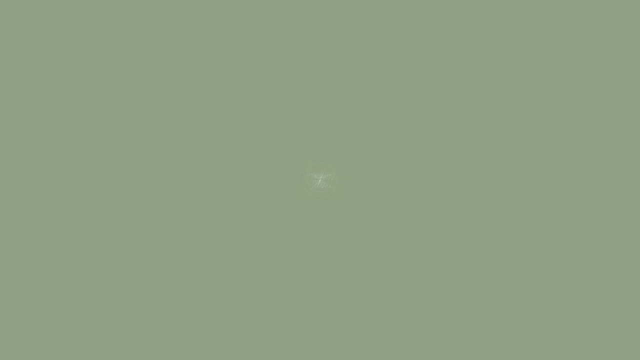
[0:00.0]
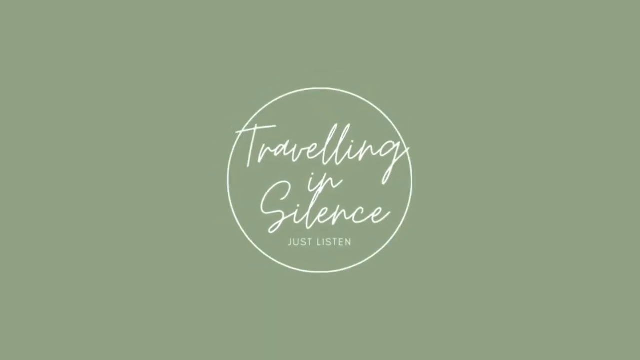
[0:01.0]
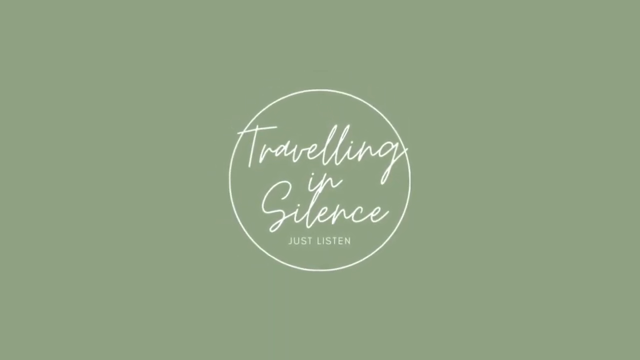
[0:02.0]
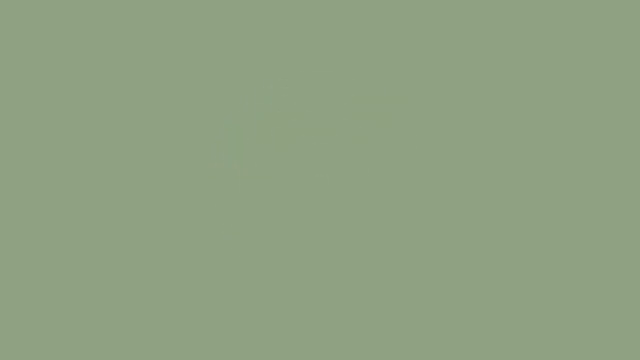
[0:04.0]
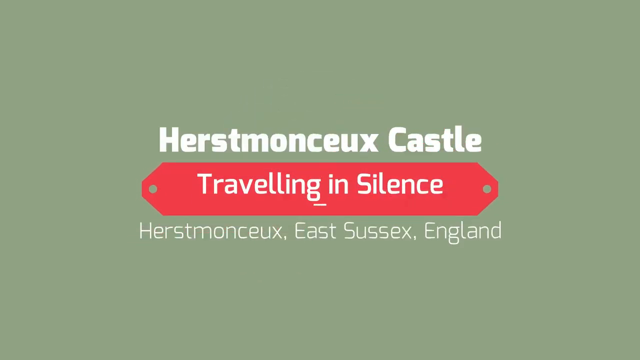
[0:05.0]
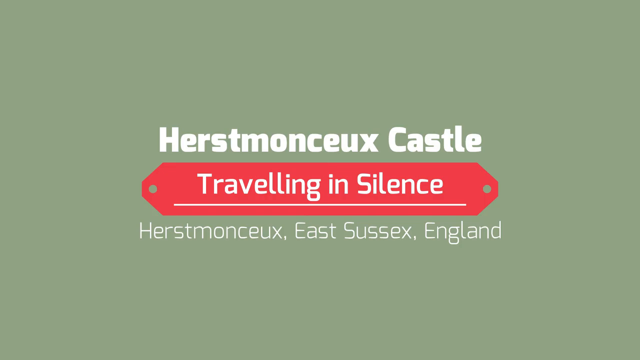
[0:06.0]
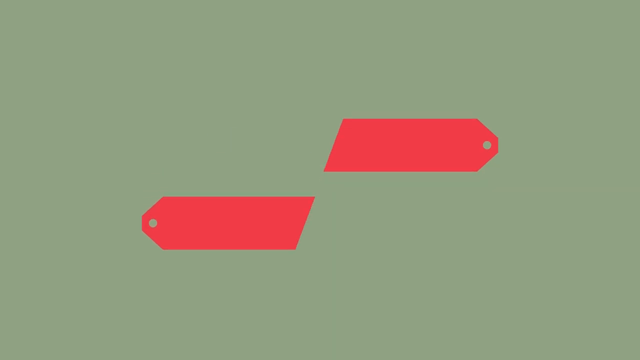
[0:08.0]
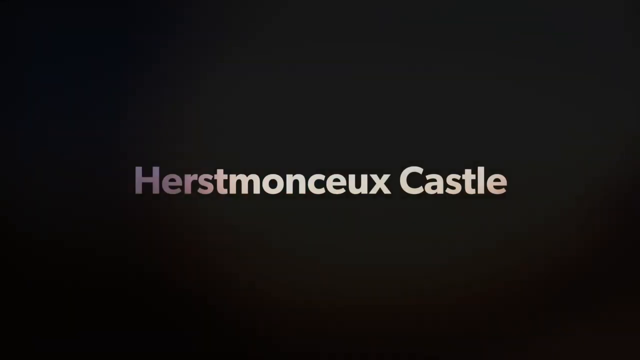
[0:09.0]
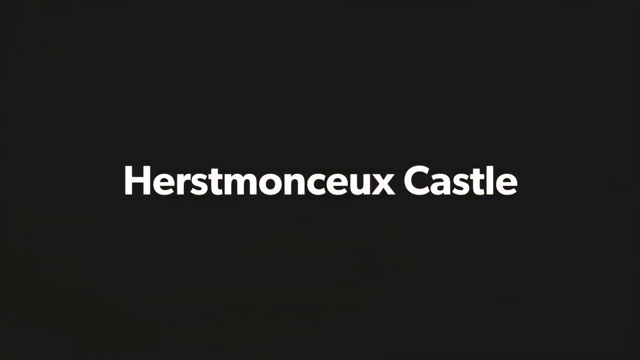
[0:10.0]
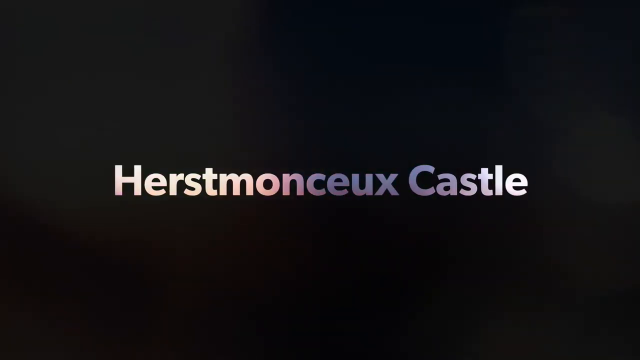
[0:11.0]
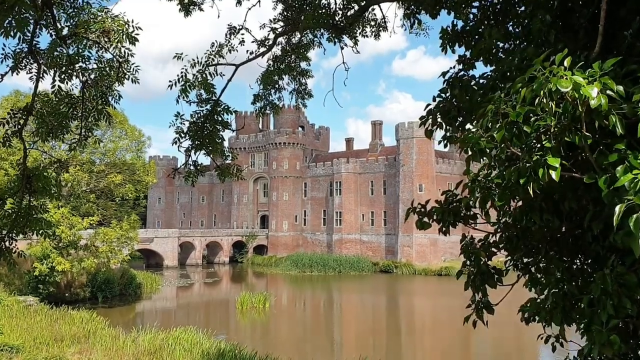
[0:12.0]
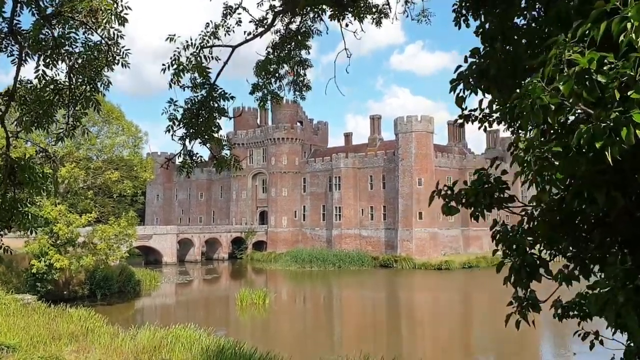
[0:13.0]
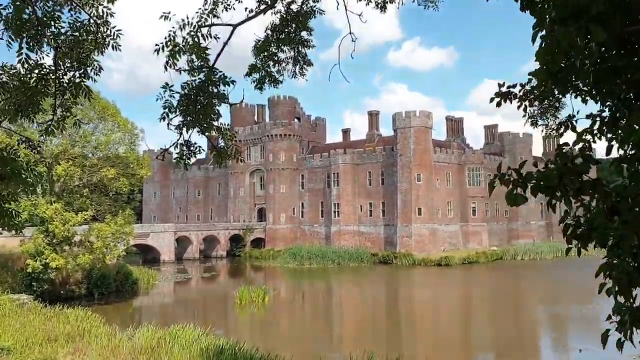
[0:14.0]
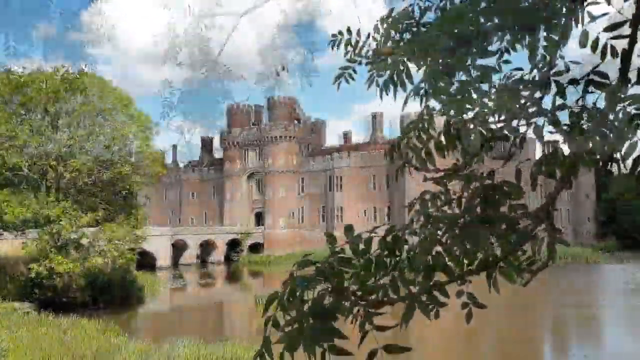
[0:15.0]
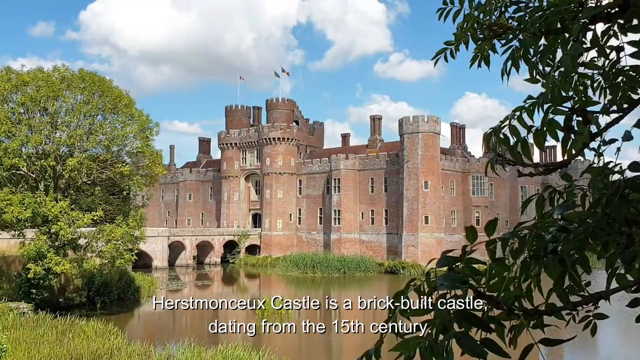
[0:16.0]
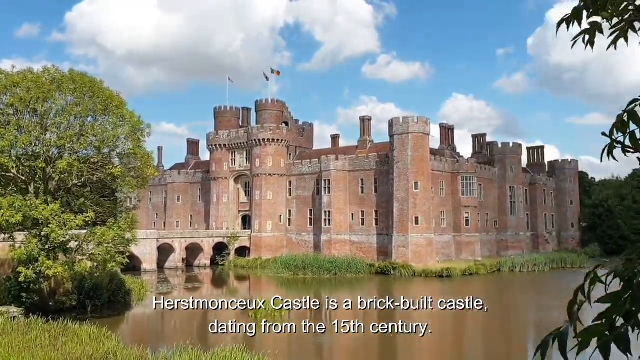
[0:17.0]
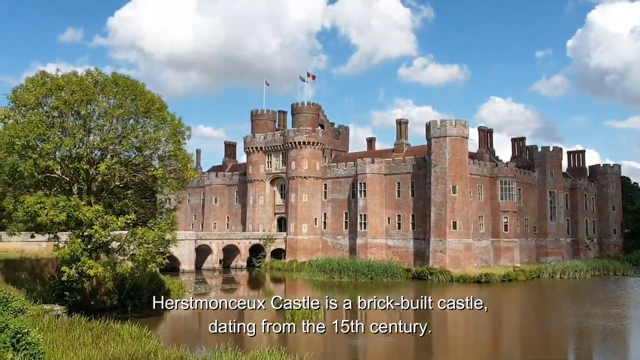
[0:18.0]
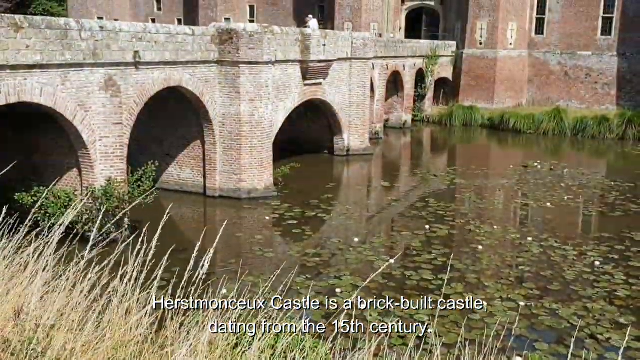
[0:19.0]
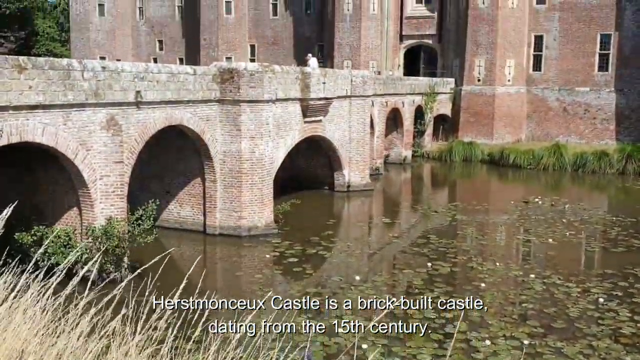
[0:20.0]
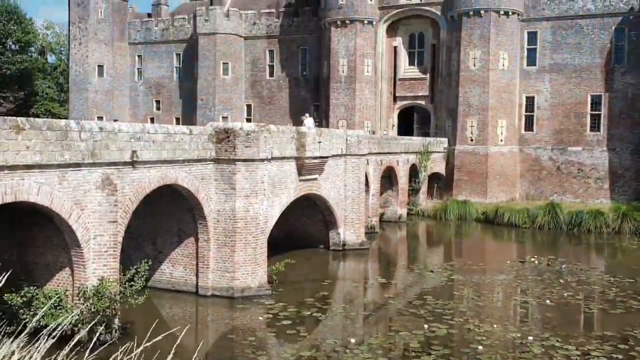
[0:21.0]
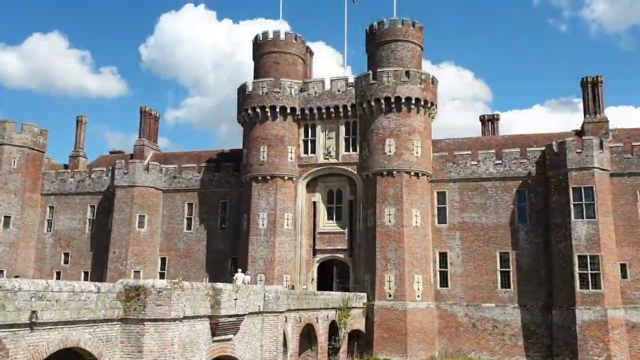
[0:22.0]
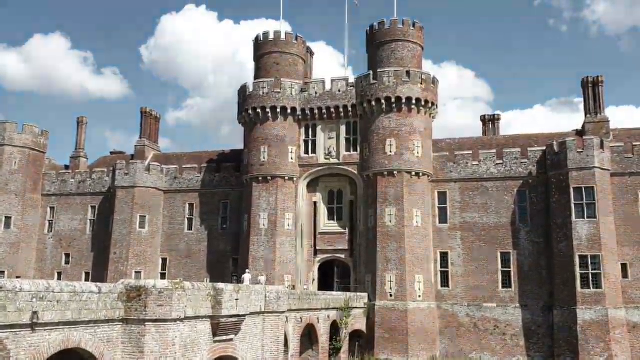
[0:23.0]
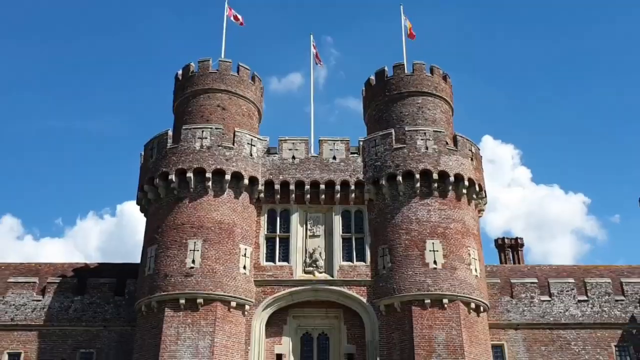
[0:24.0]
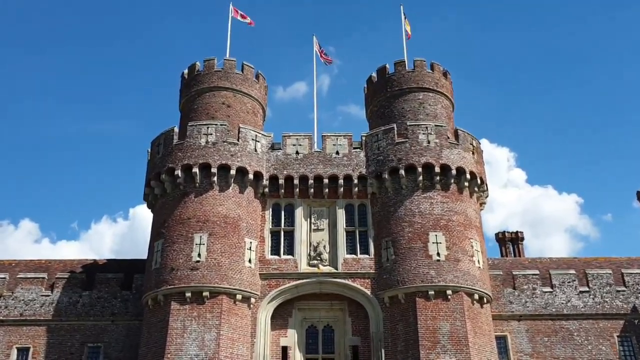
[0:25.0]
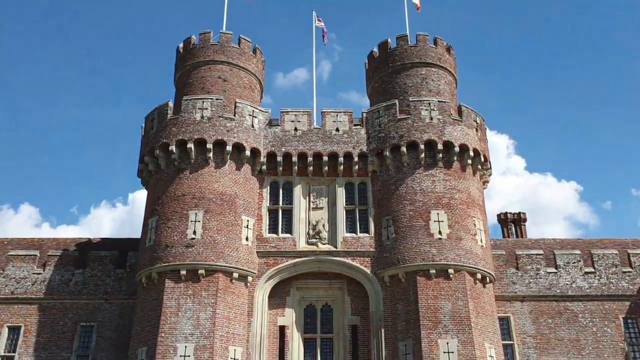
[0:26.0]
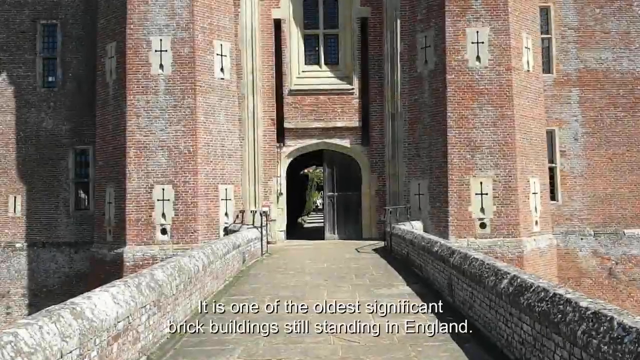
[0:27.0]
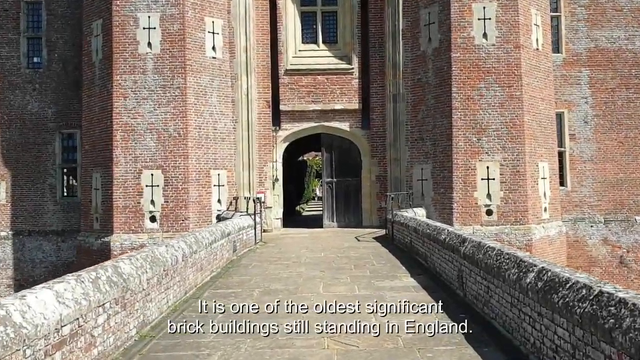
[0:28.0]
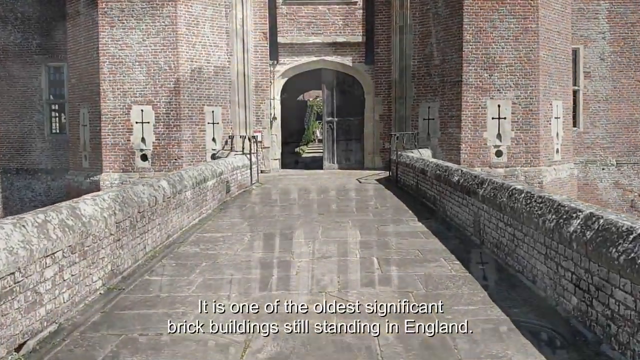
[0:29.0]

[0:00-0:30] An old brick-built castle from the 15th century, located in Sussex in England, appears in different views. A moat with water surrounds it, and a bridge leads into the castle with a couple of people on it. The people look old-fashioned, and the colours of the footage suggest it may have been filmed a long time ago, or it may be deliberately made to look vintage. Not much happens: a few people are on the castle, there are various views of the building, and the sky is visible above.